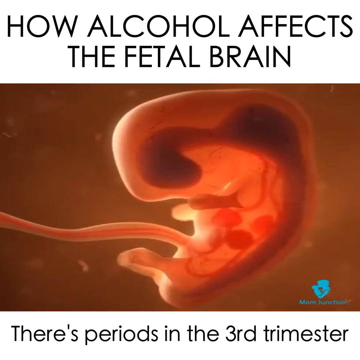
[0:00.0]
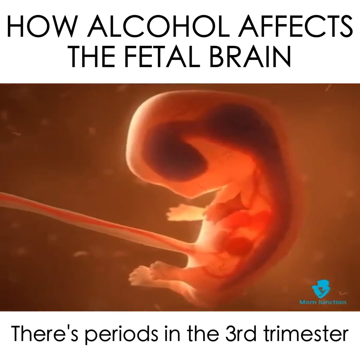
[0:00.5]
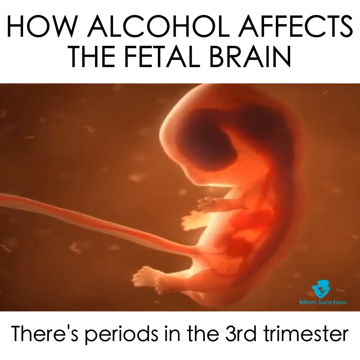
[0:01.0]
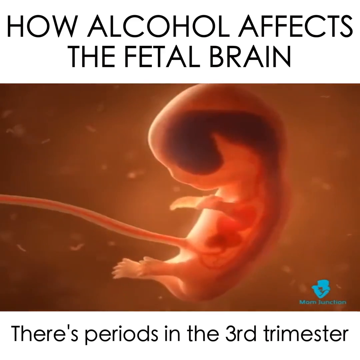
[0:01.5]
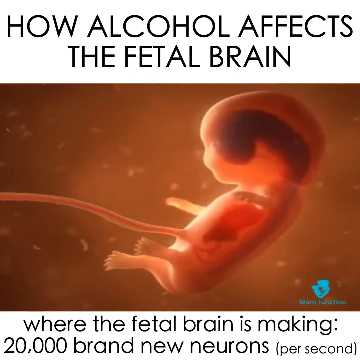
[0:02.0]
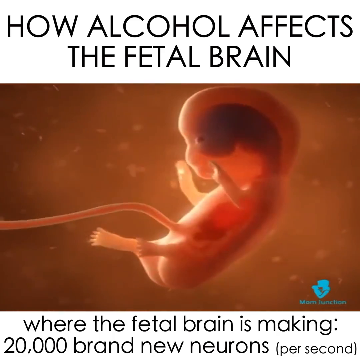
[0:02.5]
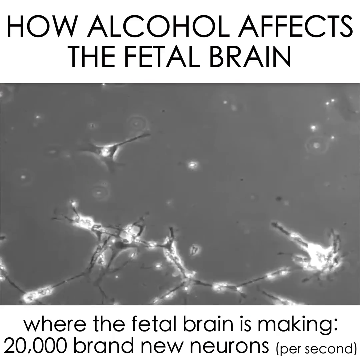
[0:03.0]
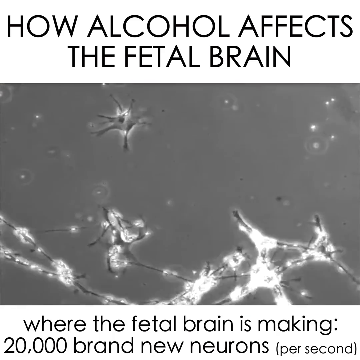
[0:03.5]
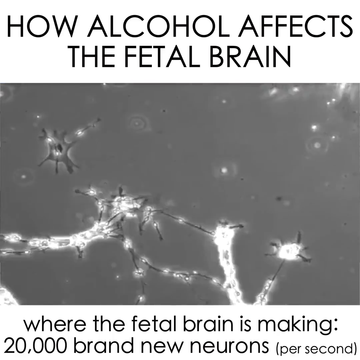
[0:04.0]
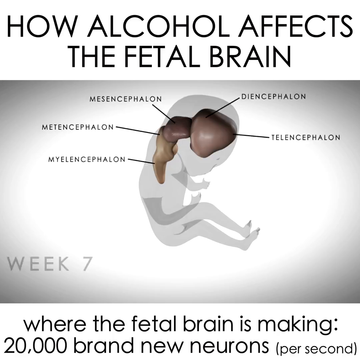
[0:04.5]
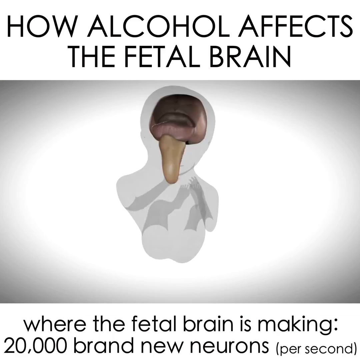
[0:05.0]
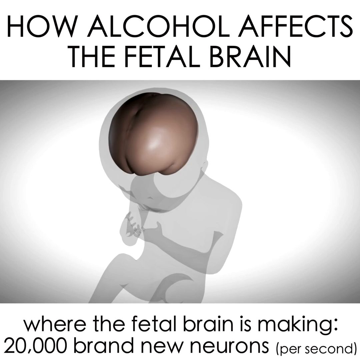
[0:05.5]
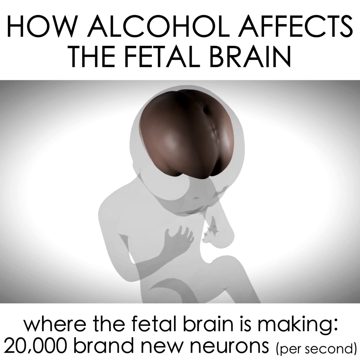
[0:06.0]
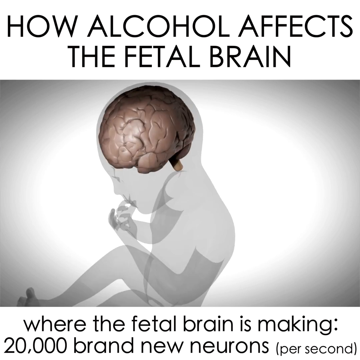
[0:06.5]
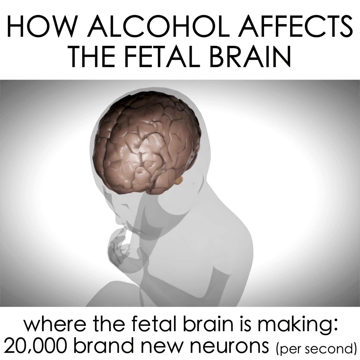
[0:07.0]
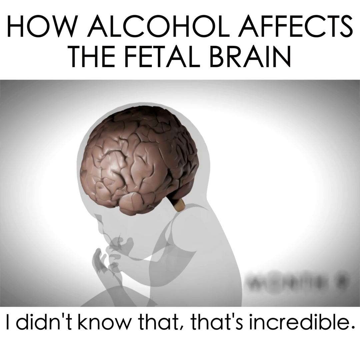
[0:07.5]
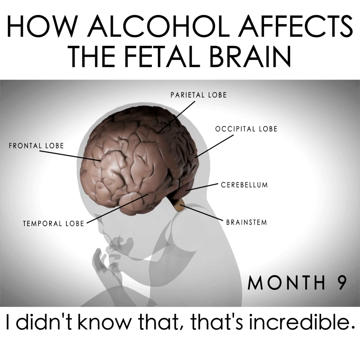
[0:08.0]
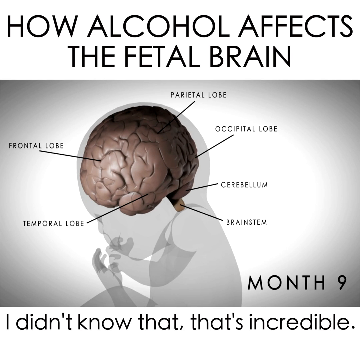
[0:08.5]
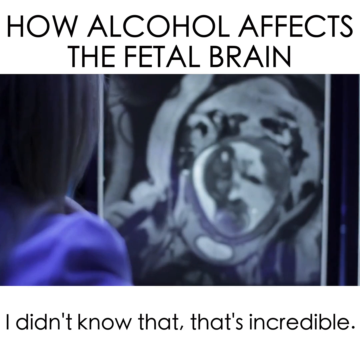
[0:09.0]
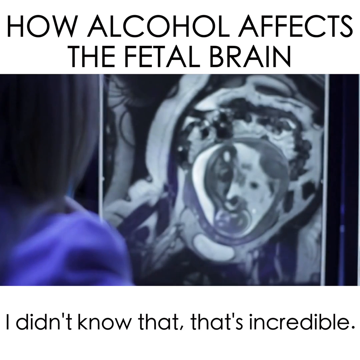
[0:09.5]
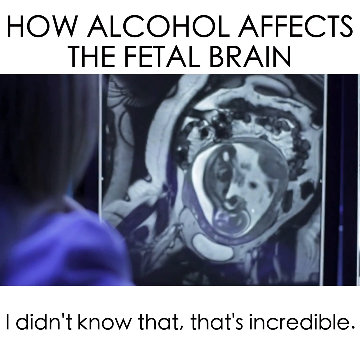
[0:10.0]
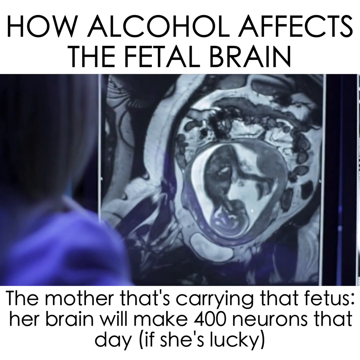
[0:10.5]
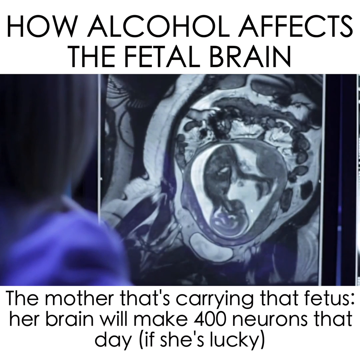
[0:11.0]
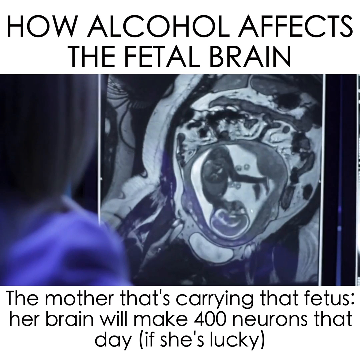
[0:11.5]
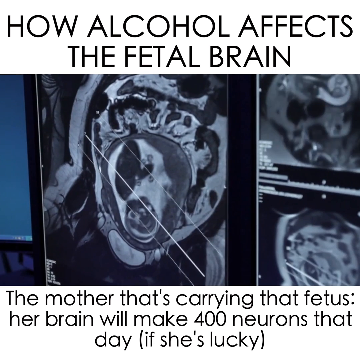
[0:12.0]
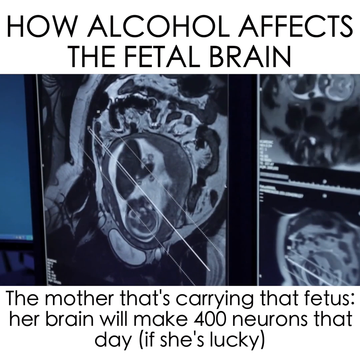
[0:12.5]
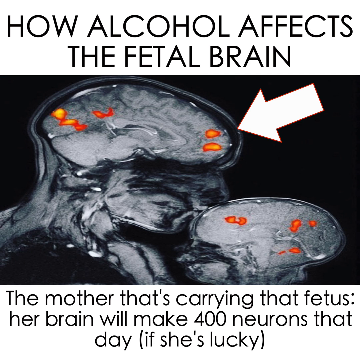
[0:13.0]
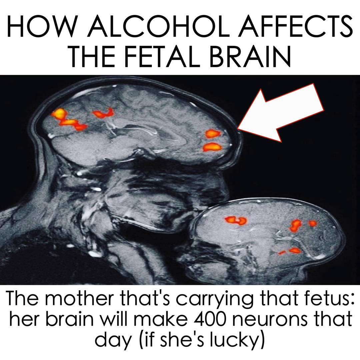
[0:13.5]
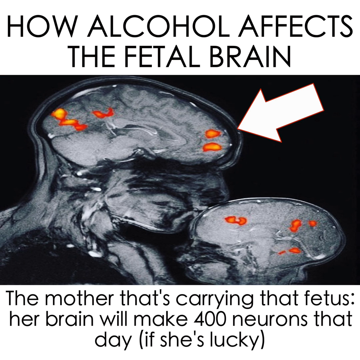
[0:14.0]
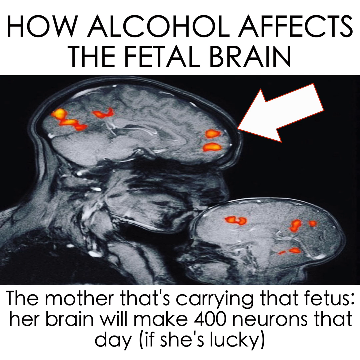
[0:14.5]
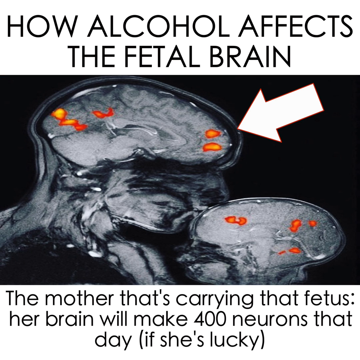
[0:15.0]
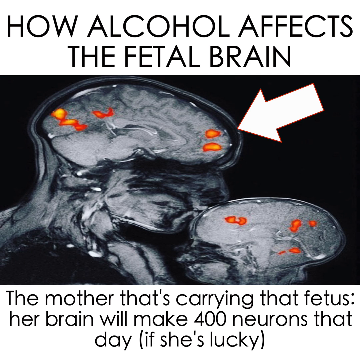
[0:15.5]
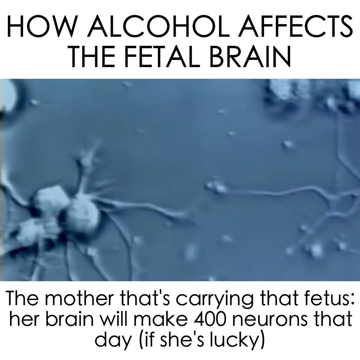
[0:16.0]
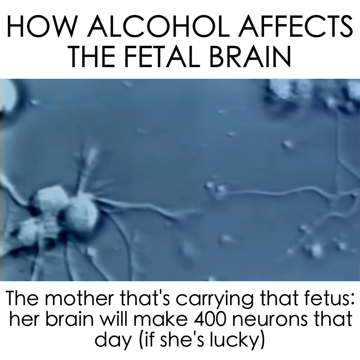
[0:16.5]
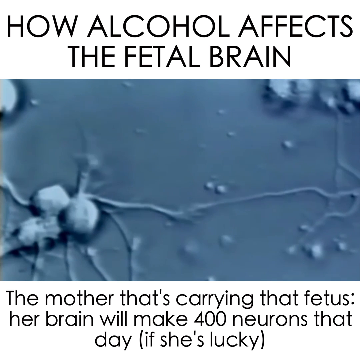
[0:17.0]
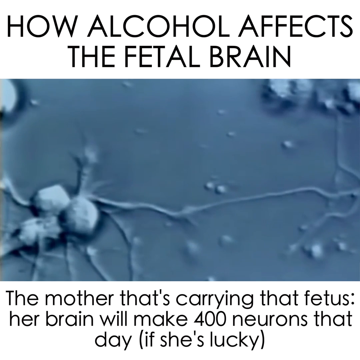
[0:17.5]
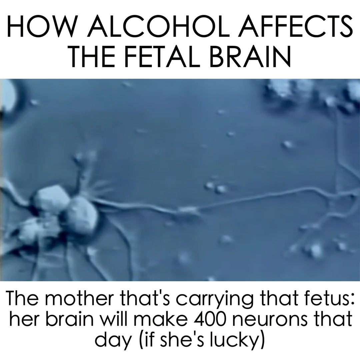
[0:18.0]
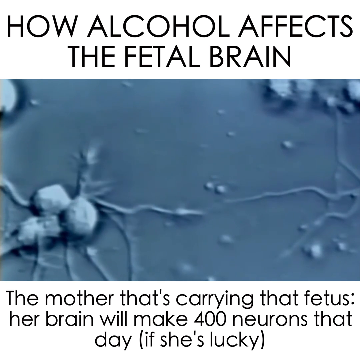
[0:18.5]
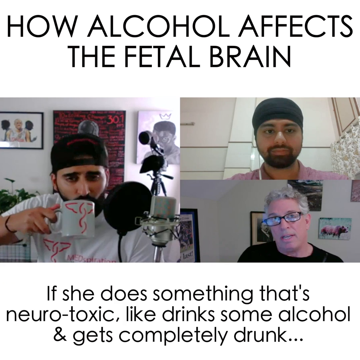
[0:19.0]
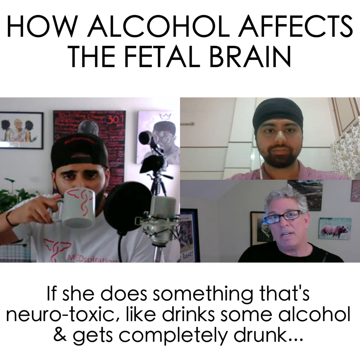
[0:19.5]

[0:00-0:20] A presentation titled "How Alcohol Affects the Fetal Brain" opens, written in black text against a white background. Beneath the title, a video of a fetus plays, and below that, black text states that the fetal brain is making 20,000 brand new neurons. A microscopic video follows, showing neurons firing between each other: the nerve cells move around, and bright lights appear as the synapses of the nerves fire. The view then comes to a 3D model of an infant's silhouette with the brain visible inside it. The model rotates, and various lines point to different areas of the brain: the parietal lobe at the top, the occipital lobe toward the mid-bottom of the brain, the cerebellum toward the bottom, and then the brain stem. To the left of that is the temporal lobe, and at the front of the skull is the frontal lobe. Down in the bottom corner, "month 9" appears in black text.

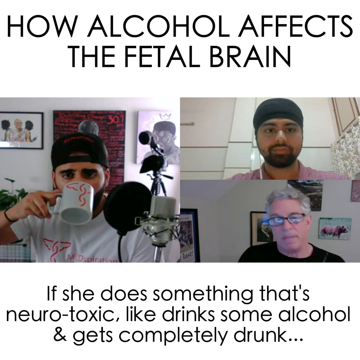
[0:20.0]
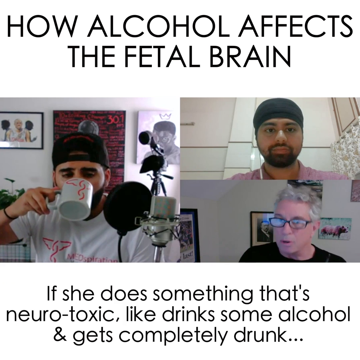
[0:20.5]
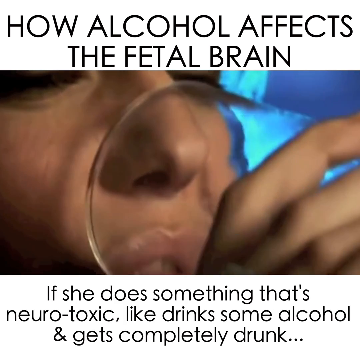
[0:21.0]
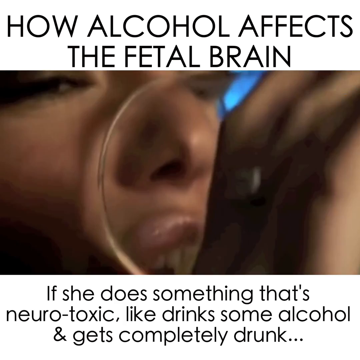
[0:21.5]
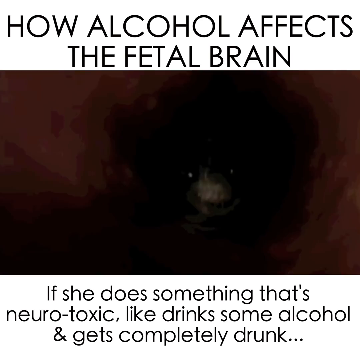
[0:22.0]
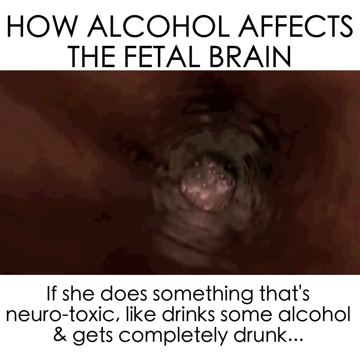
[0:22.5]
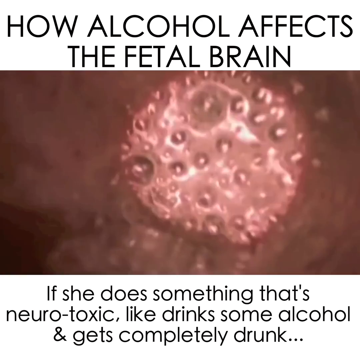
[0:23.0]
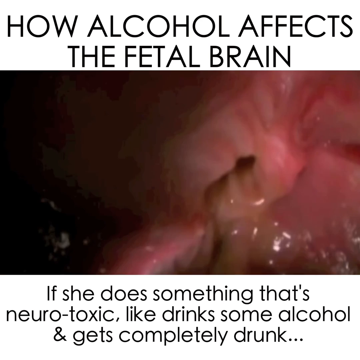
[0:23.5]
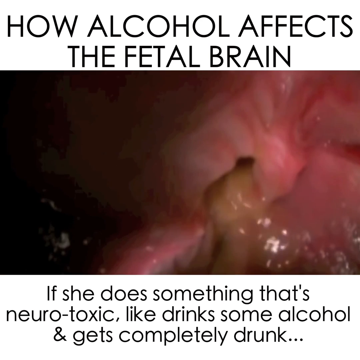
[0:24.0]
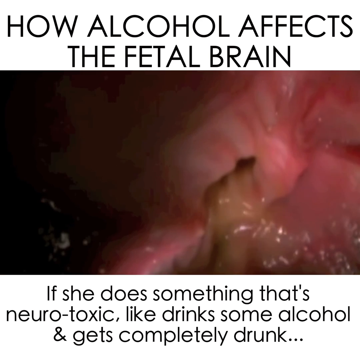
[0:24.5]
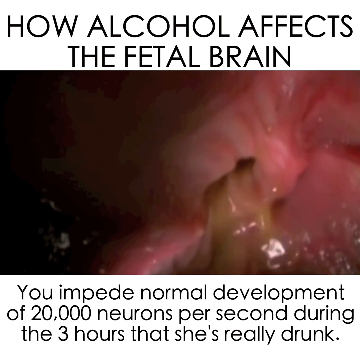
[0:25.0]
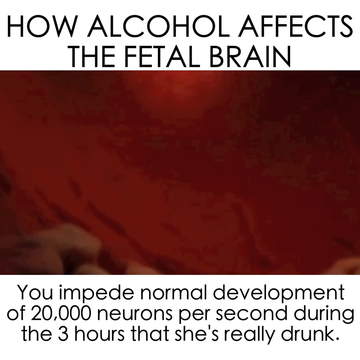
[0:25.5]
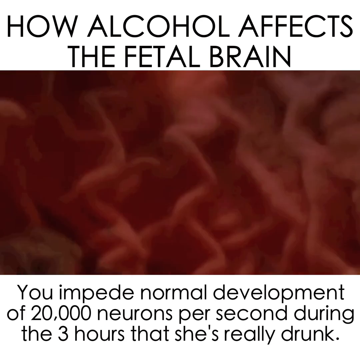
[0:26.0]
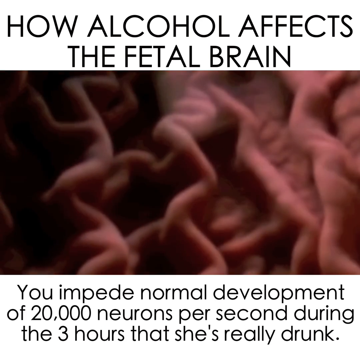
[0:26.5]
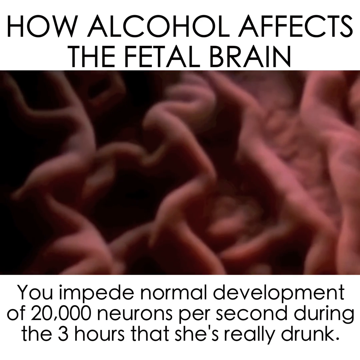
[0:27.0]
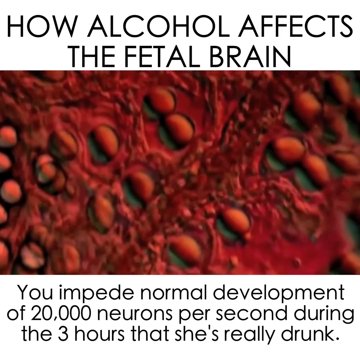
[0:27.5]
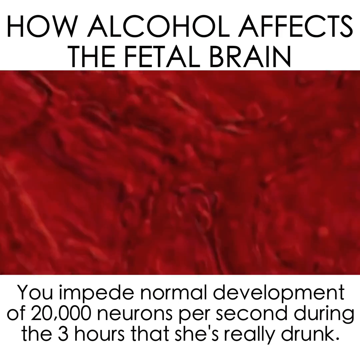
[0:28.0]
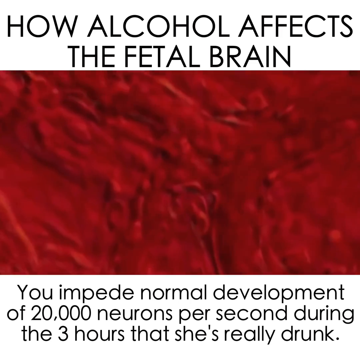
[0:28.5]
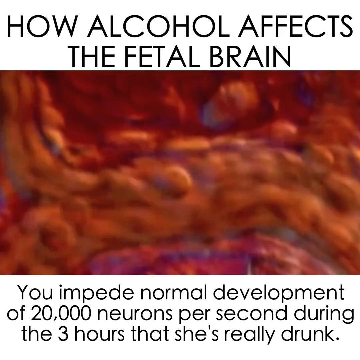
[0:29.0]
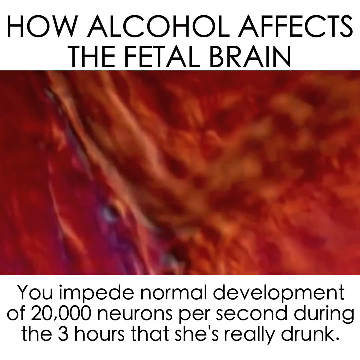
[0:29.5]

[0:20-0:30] The video cuts to an interview between a young man and what appear to be two doctors on the right side of the screen. The man on the left drinks a cup of coffee as he asks his questions. At the bottom of the screen, black text on a white background reads, "if she does something that's neurotoxic, like drink some alcohol and gets completely drunk," while a liquid is shown coming down the esophagus during the drinking. The text then changes to "you impede normal development of 20,000 neurons per second during the three hours that she's really drunk." The view keeps moving closer in a microscopic fashion until red blood cells are seen moving back and forth across the developing fetus.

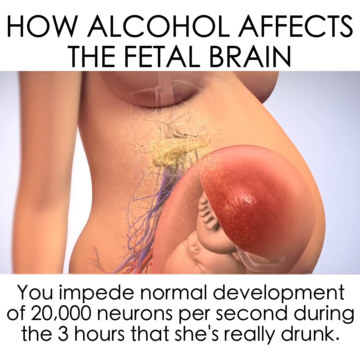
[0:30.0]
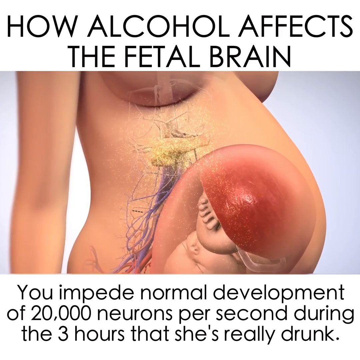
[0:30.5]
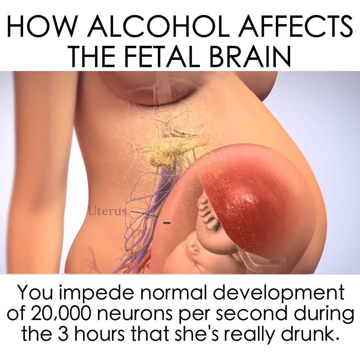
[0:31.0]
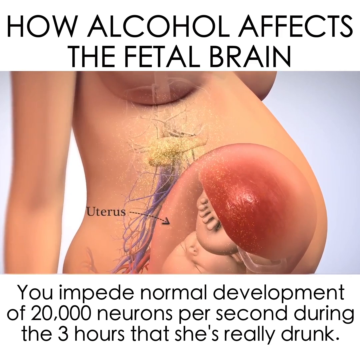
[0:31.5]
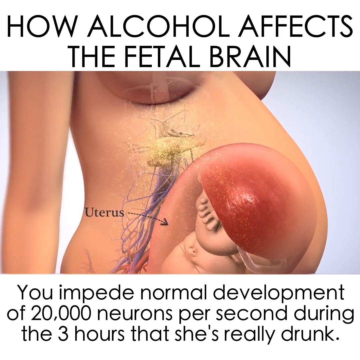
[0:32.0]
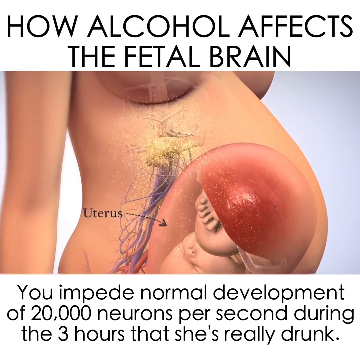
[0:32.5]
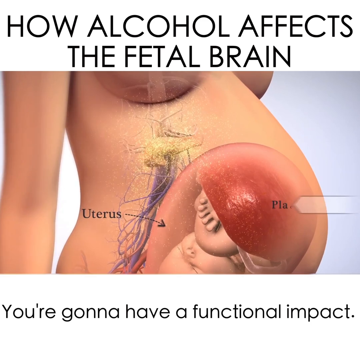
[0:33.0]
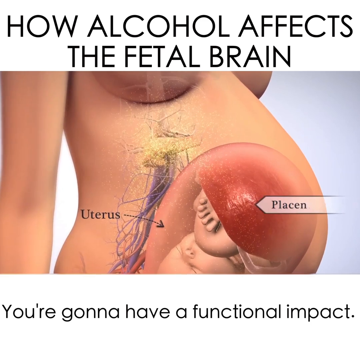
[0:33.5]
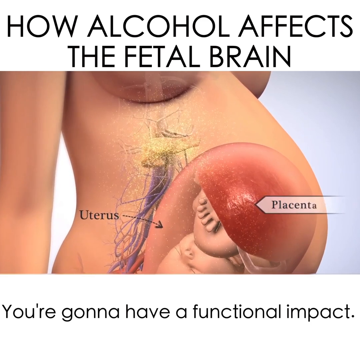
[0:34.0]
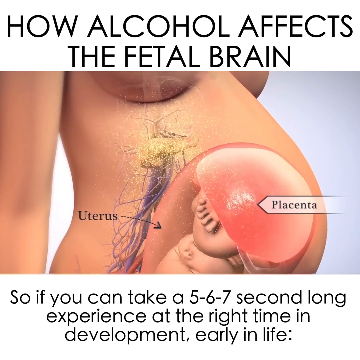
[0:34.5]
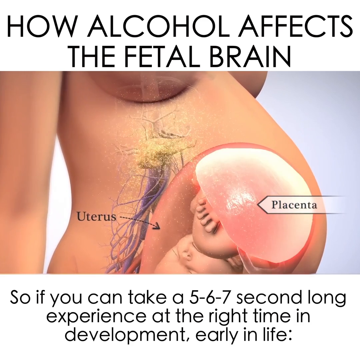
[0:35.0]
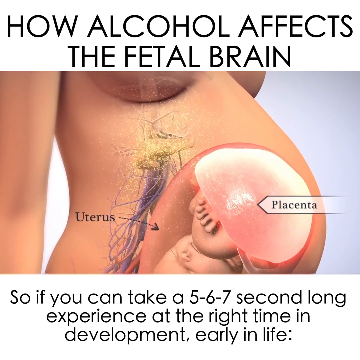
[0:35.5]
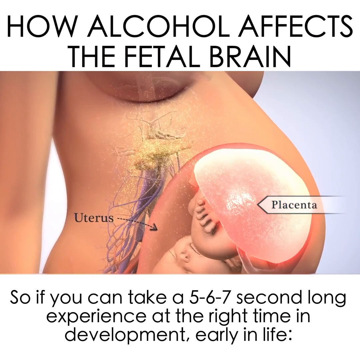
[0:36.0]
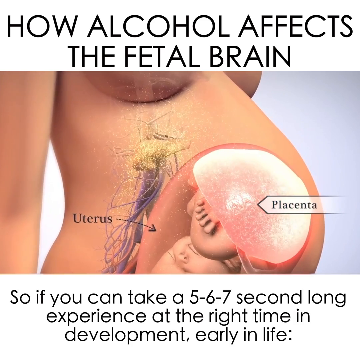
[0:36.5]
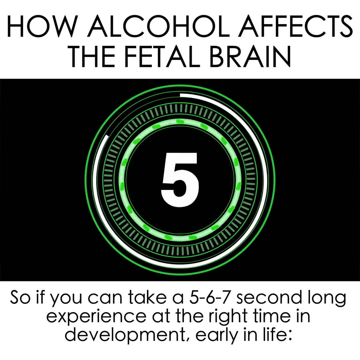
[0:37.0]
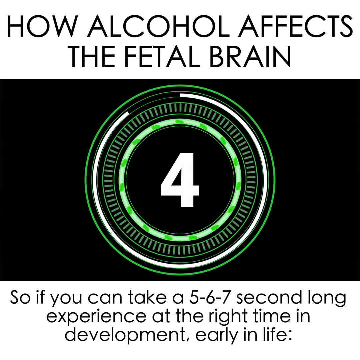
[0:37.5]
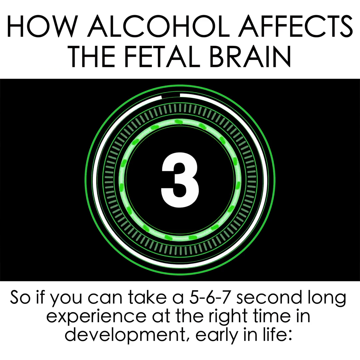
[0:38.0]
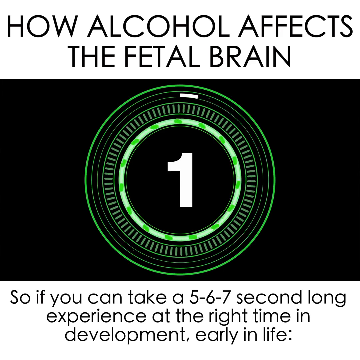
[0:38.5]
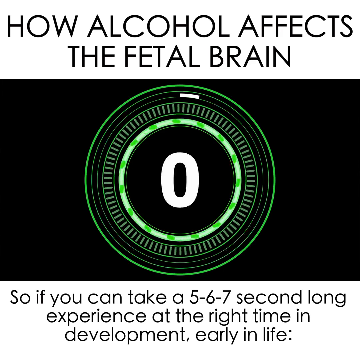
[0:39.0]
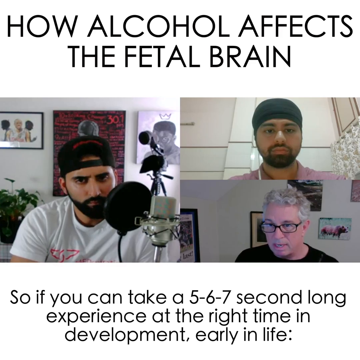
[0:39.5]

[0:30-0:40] The video cuts to a 3D model of an explosion. A sort of x-ray view inside a woman shows the fetus developing inside her uterus. The view slowly zooms in as an arrow points at the uterus, with text next to it, and another arrow points above it at the placenta connected to the developing infant. A countdown timer on the screen goes from five down to zero. Beneath it, text reads, "so if you can take a 5, 6, 7 second long experience at the right time in development, early life."